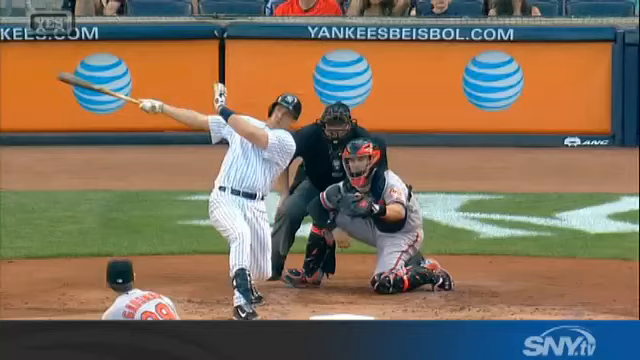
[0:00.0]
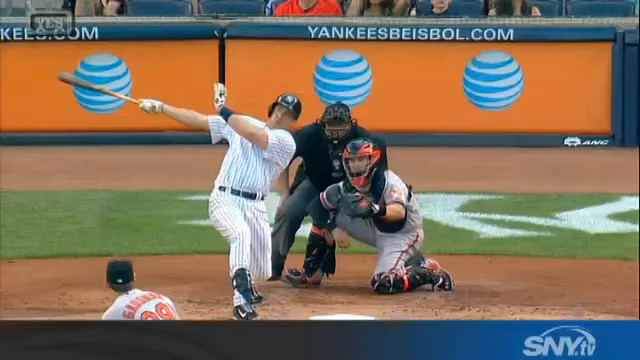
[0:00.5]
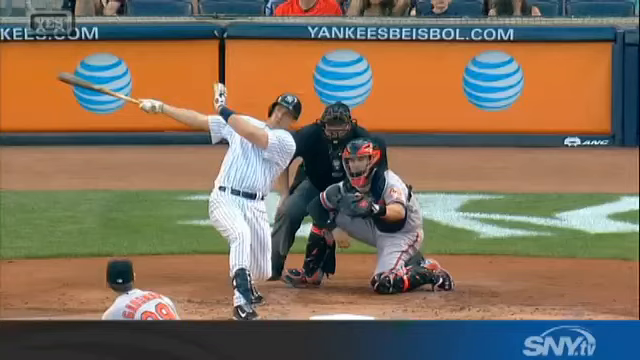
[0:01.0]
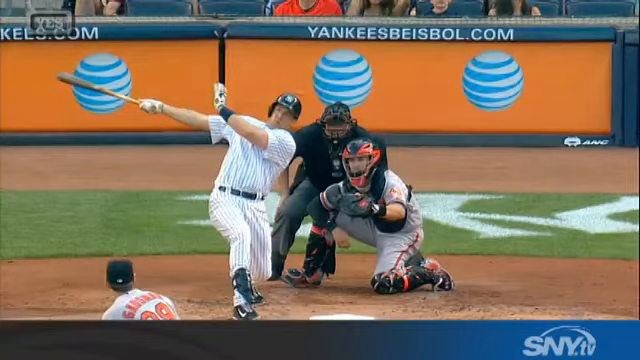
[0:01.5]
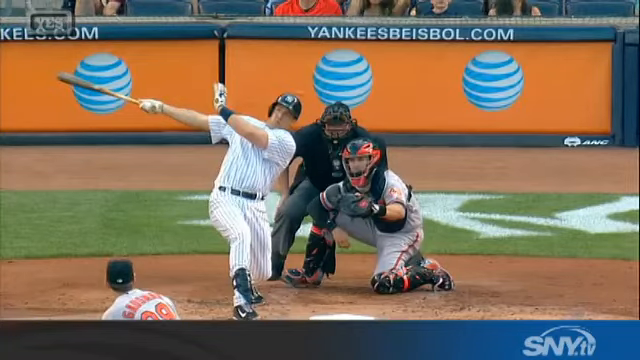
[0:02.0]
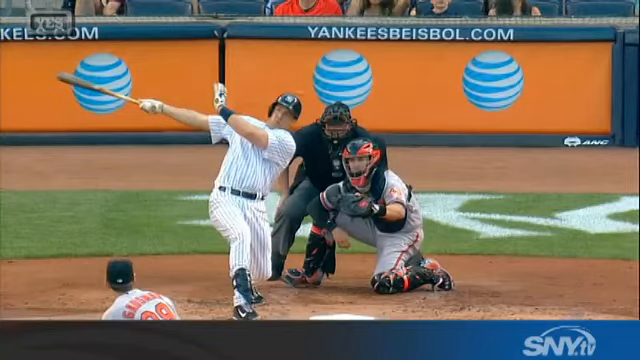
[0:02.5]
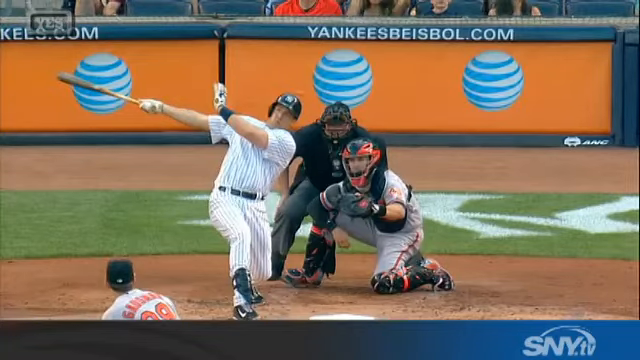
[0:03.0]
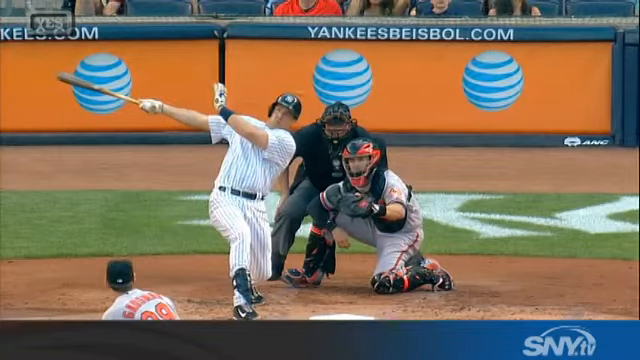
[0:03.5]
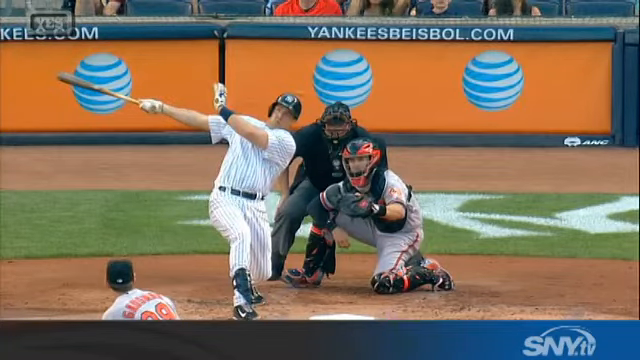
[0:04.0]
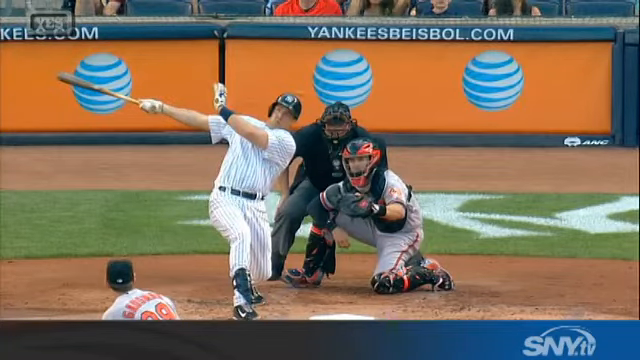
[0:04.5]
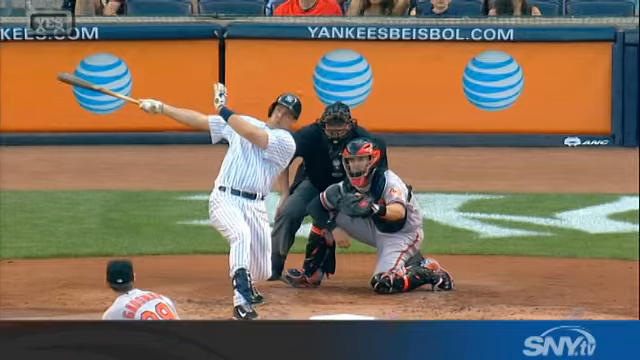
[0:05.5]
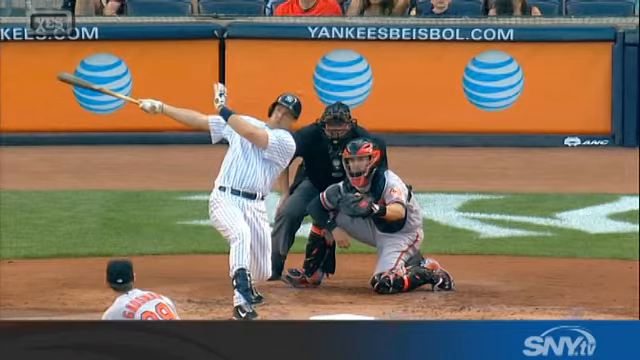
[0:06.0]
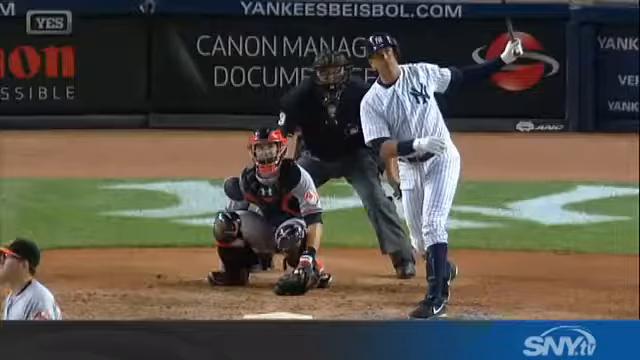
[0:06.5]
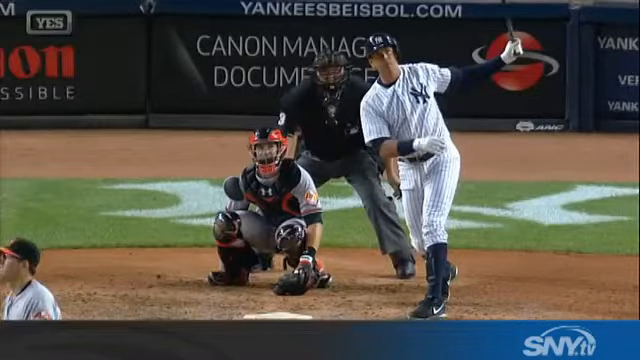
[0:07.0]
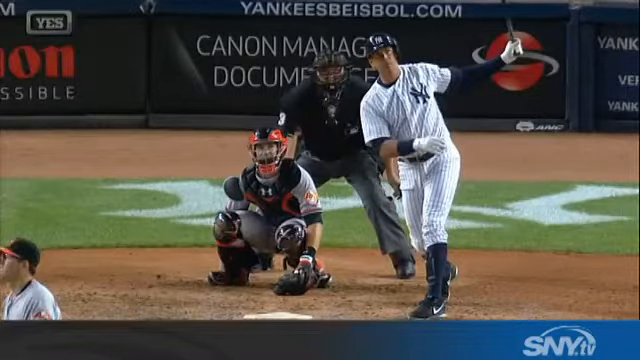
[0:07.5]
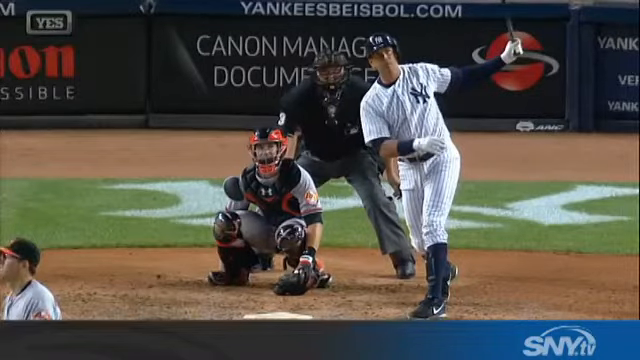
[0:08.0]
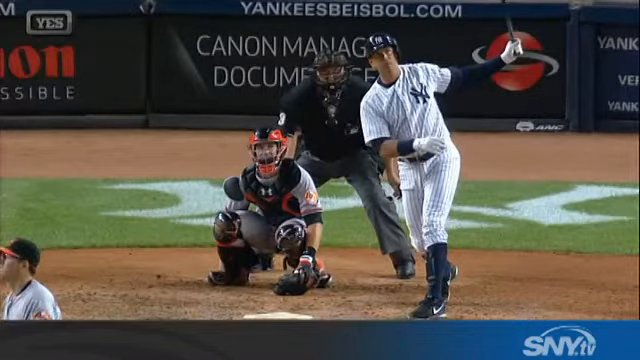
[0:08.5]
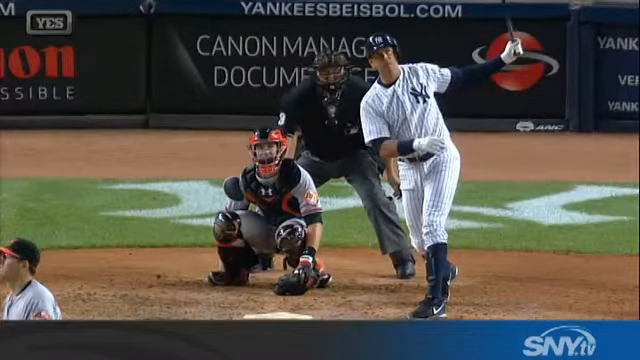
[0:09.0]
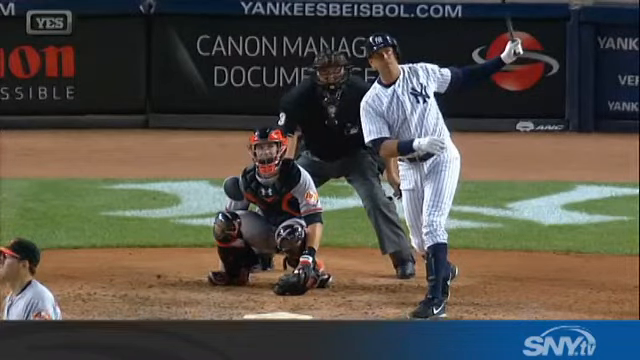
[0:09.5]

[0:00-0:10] A baseball game is shown. On the wall near the field is an AT&T symbol, and above it is text beginning with "Yankees" and ending in ".com". One of the Yankees appears to hit, or at least swing at, a ball, and pitchers are shown pitching. The opposing team is unclear. The pitcher's number has two digits, the last of which is 9.